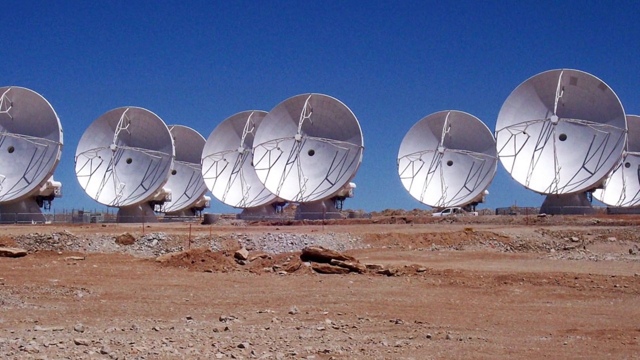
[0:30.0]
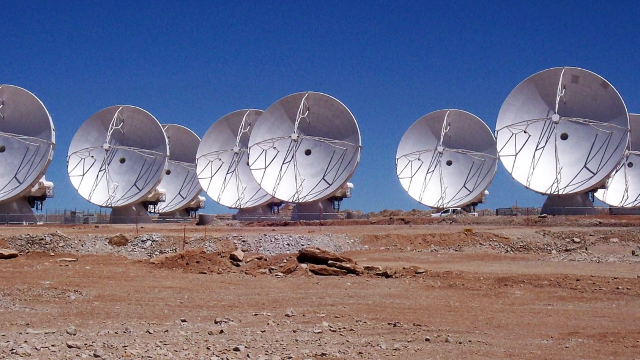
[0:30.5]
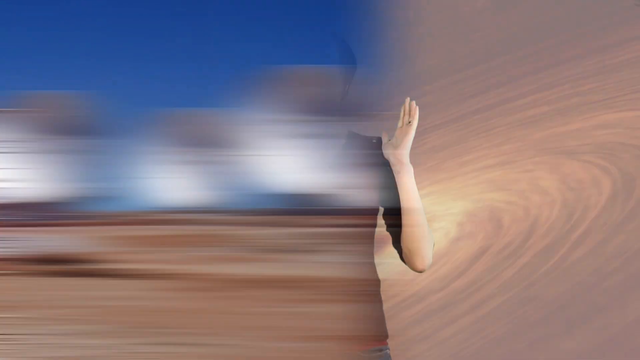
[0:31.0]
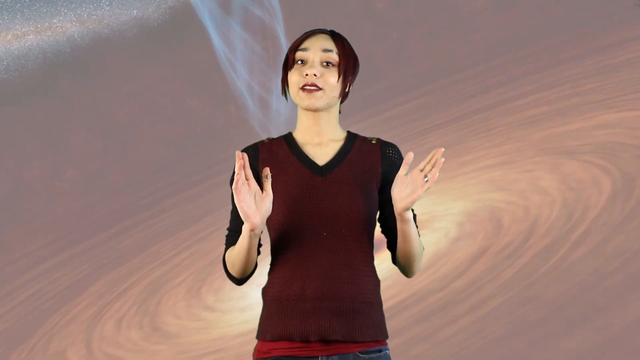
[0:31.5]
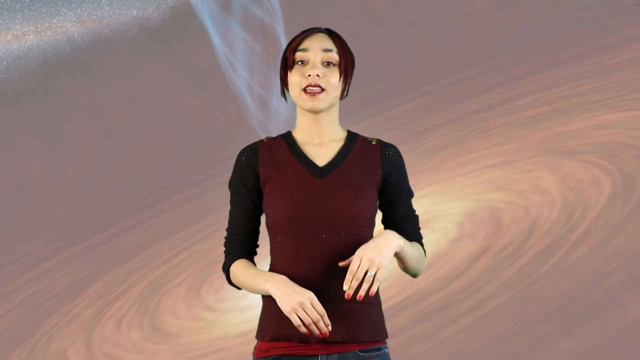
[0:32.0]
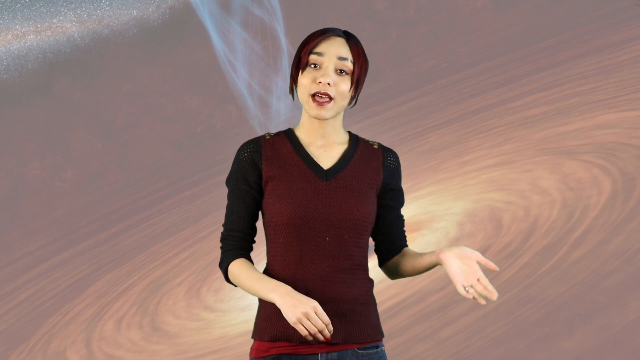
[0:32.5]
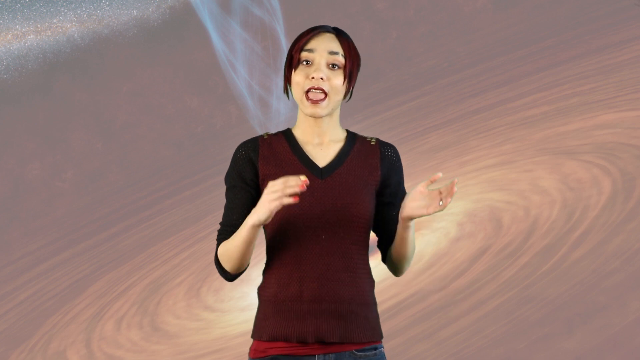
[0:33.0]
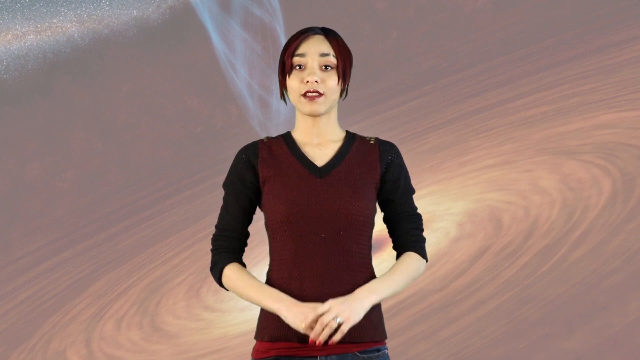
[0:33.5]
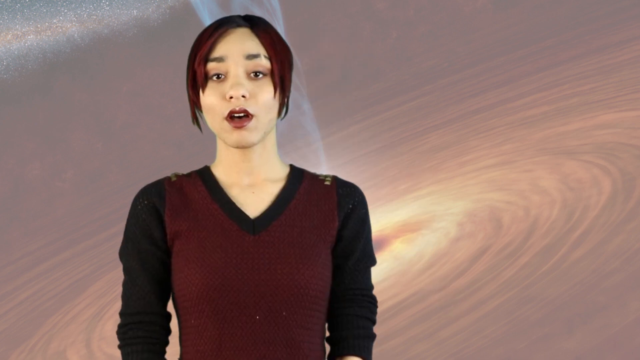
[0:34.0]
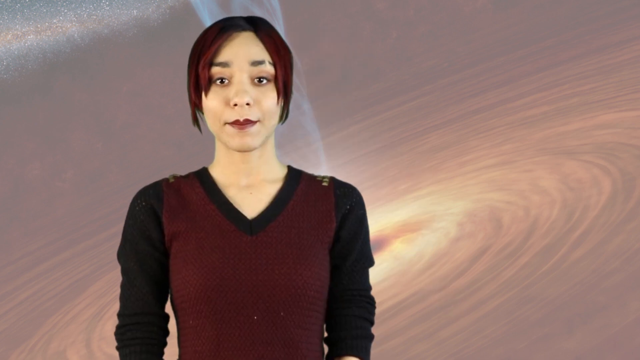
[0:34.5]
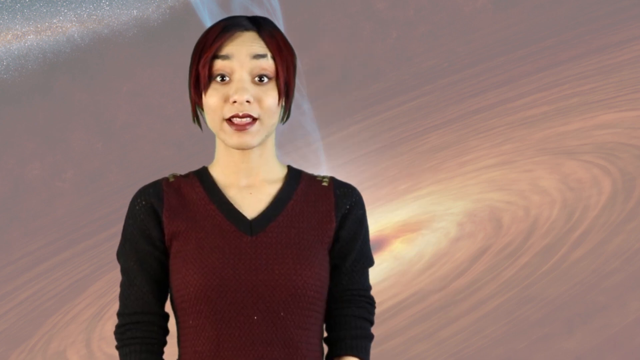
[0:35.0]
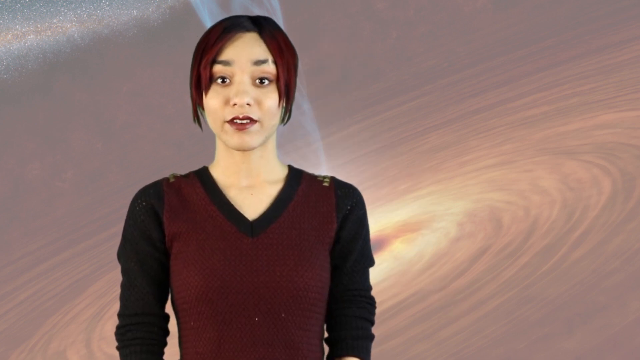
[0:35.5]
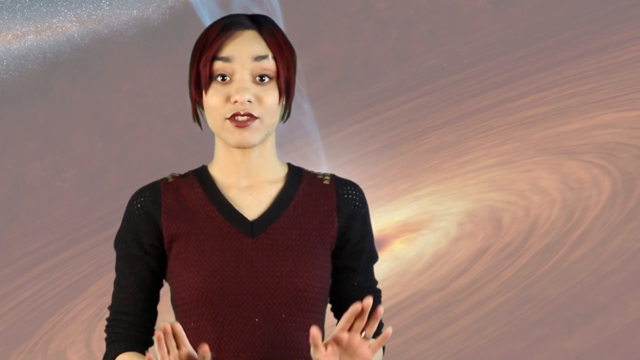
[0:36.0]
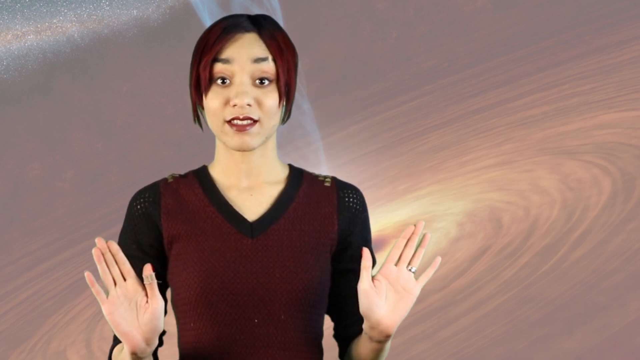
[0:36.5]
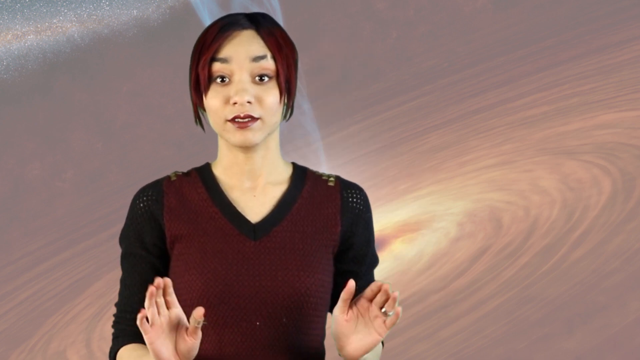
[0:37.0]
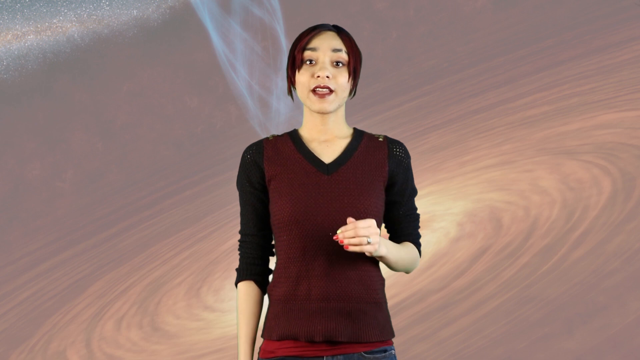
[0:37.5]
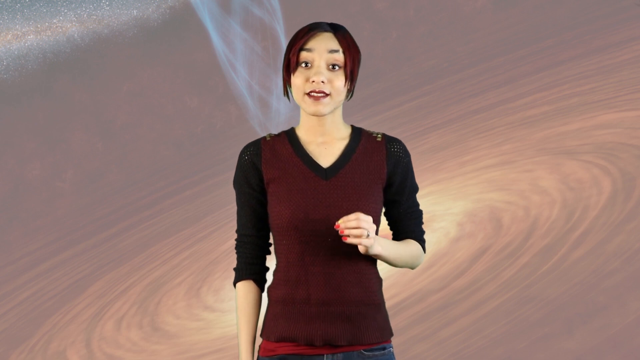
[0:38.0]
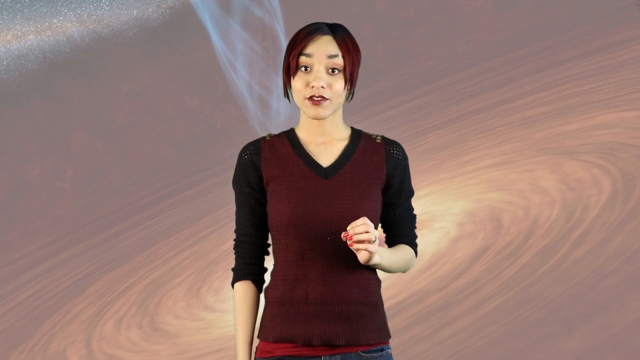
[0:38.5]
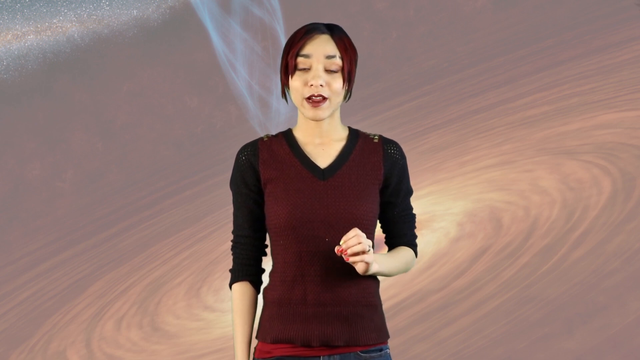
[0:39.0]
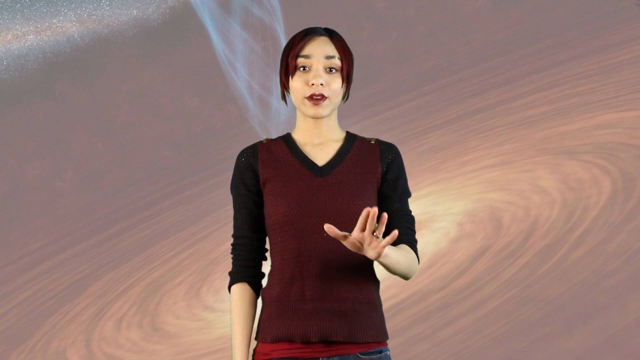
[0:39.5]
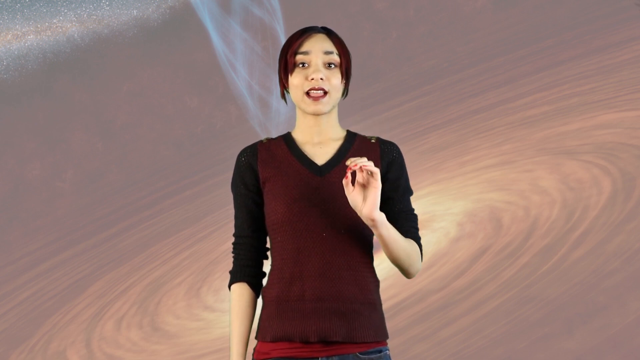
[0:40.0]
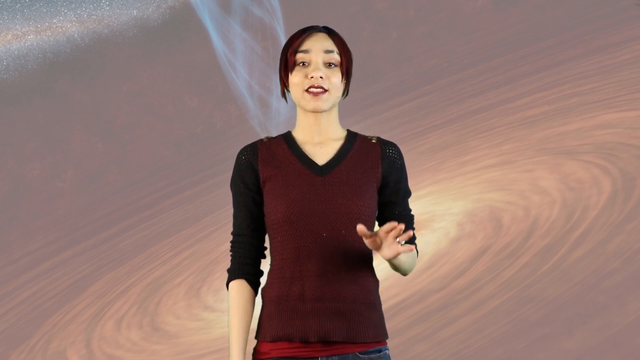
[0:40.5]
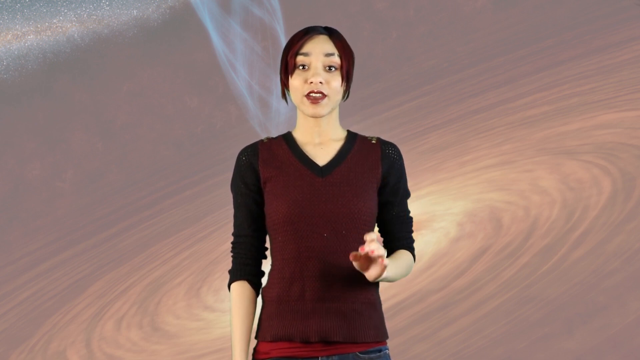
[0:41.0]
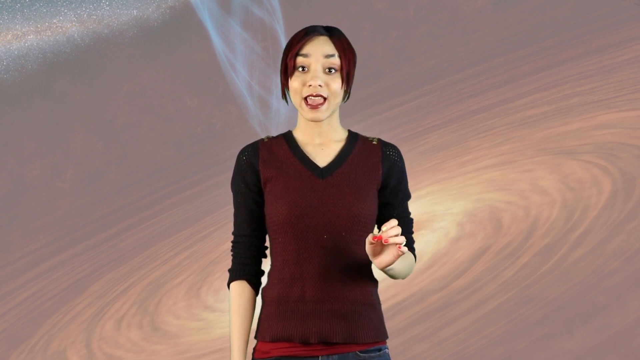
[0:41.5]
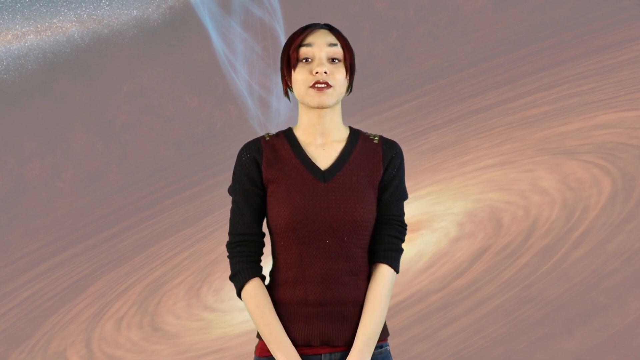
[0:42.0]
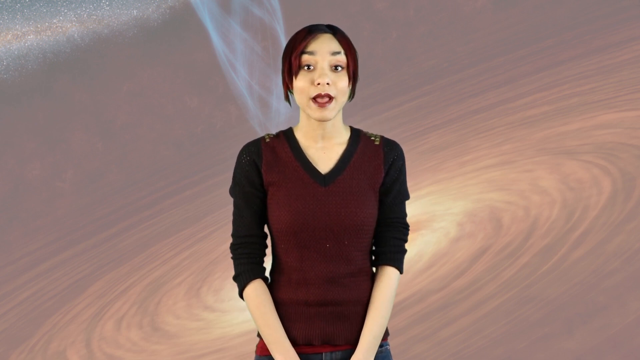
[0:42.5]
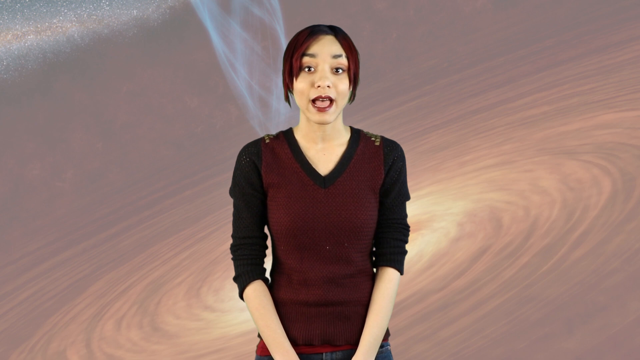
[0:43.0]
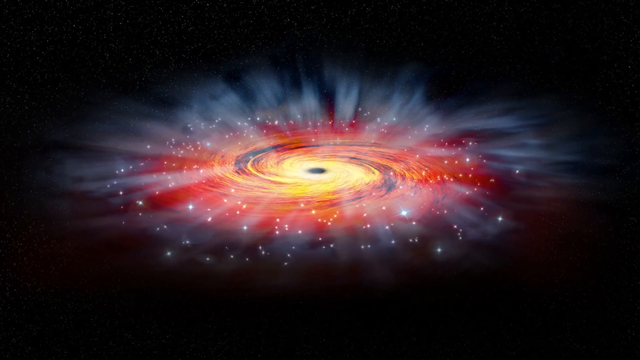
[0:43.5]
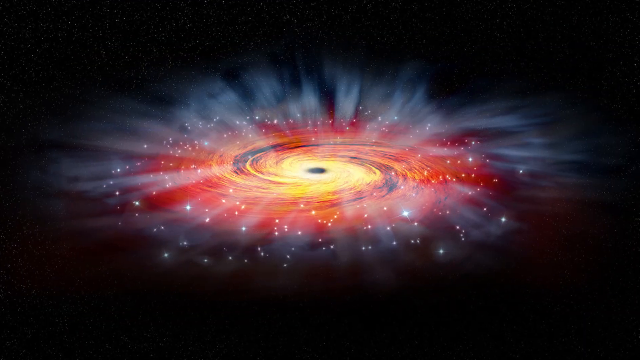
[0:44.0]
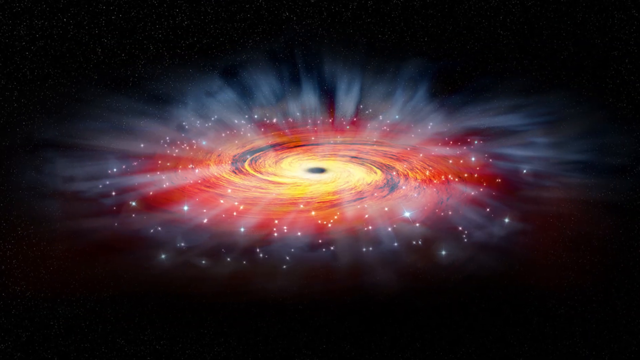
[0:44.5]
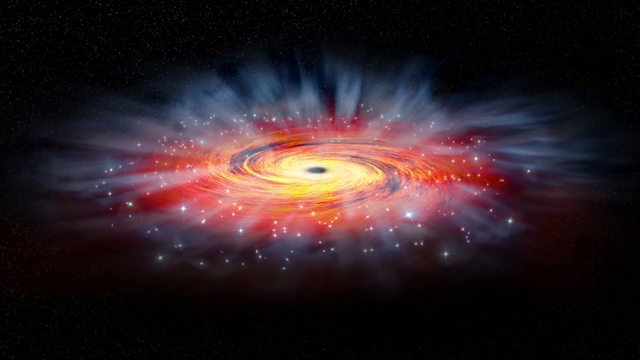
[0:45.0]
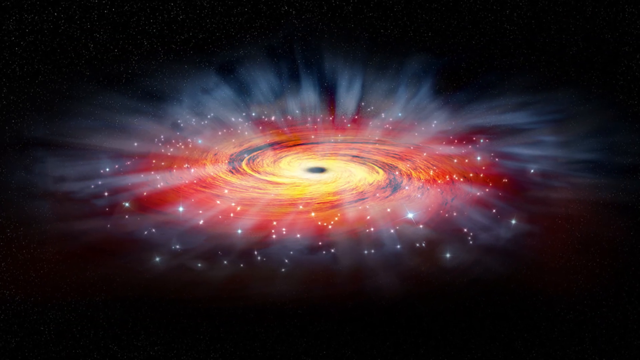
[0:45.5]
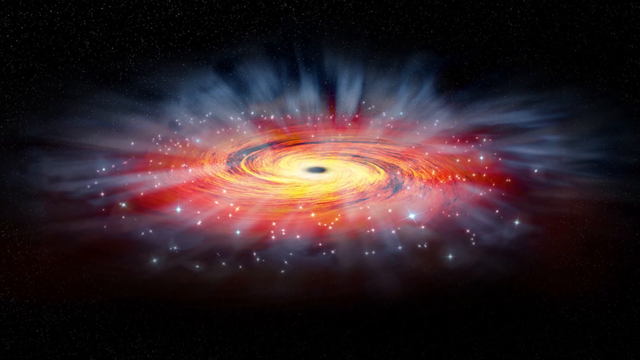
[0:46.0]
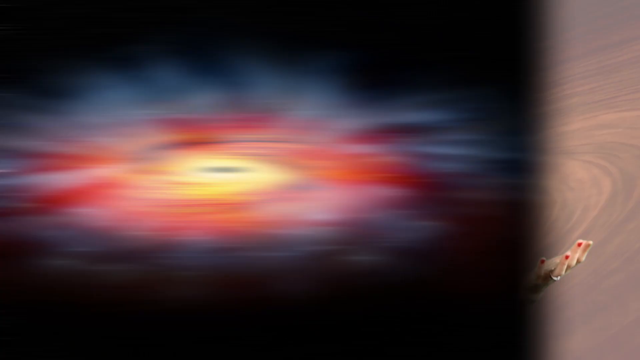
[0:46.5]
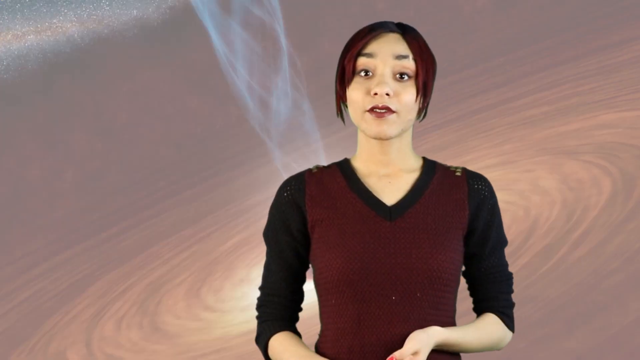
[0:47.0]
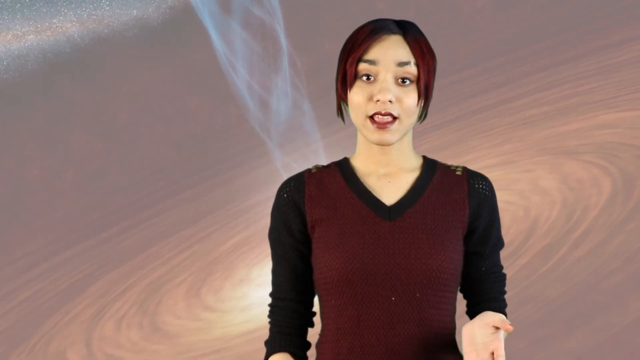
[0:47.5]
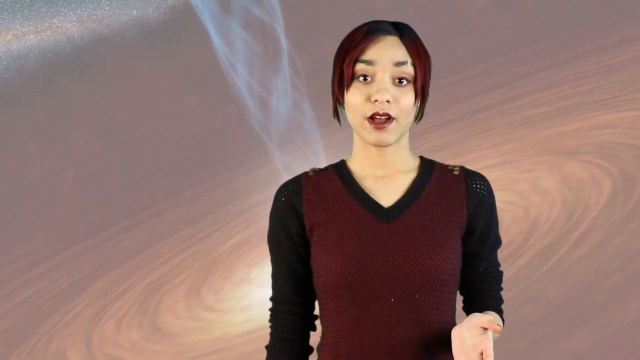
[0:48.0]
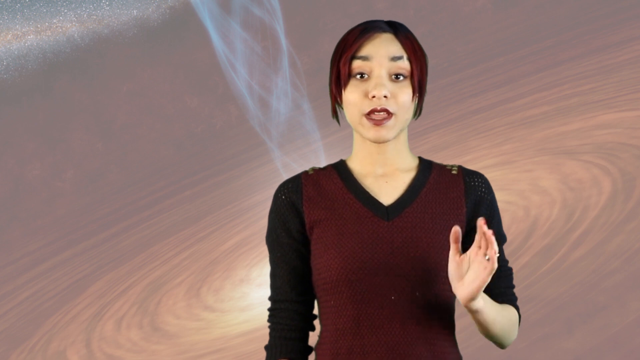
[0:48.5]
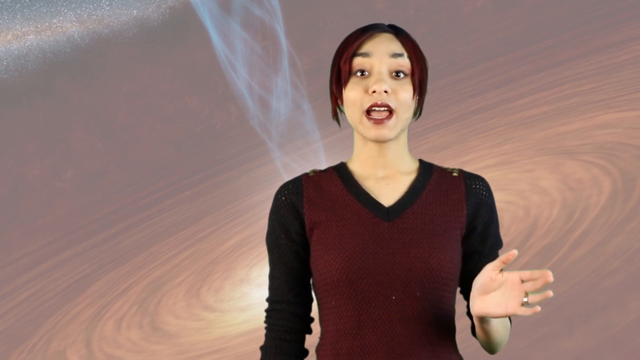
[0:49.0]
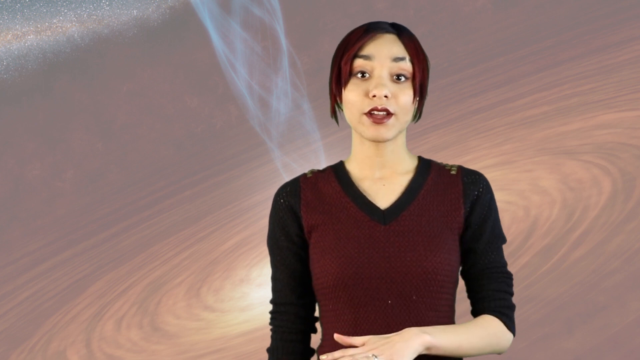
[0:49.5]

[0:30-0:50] The seven satellites stand under the blue sky with dirt across the bottom. A vehicle in front of the third satellite from the right moves in the far distance toward the right as the view slowly zooms in to the right. The video returns to Sasha standing in front of the same background as before. Her elbows are bent and her hands are out in front of her, bent at the wrist so the backs of her hands are visible, the right one at her waist. Her right hand goes up over her shoulder and comes back down to her waist, now palm toward the camera; her head is slightly tilted to the right as she looks straight ahead, talking. Both hands kind of come up to her shoulders and drop back down. The camera zooms in a little, and she is now a little left of center, raising her eyebrows; she has a little shaved spot in her right eyebrow. Her hands come up from the bottom of the screen, palms toward the camera. Back in the wider shot, her left arm is down and her right arm is bent in front of her chest, moving just a little with the palm out; she closes her fingers together, drops her hands and crosses them in front of her. The video cuts to a space look, yellow in the center and swirling out into red, orange and darker colors, with a lot of blue haze coming off the side and little dots for stars. It cuts back to a closer shot of her talking, right of center, her hand barely moving at the bottom of the screen before it comes up to about shoulder level and waves back and forth a couple of times.